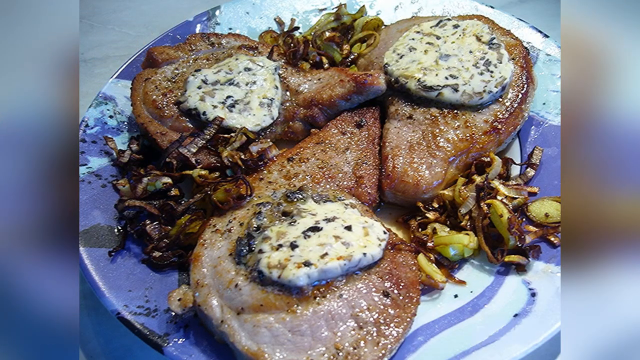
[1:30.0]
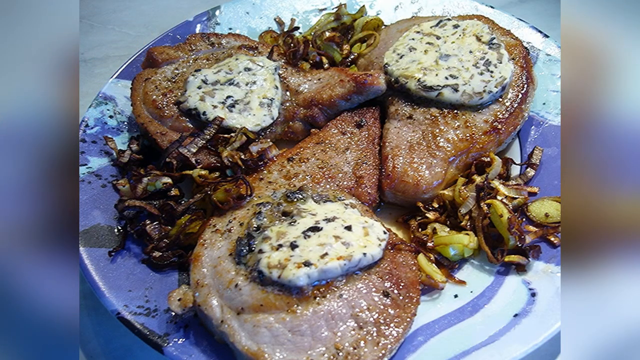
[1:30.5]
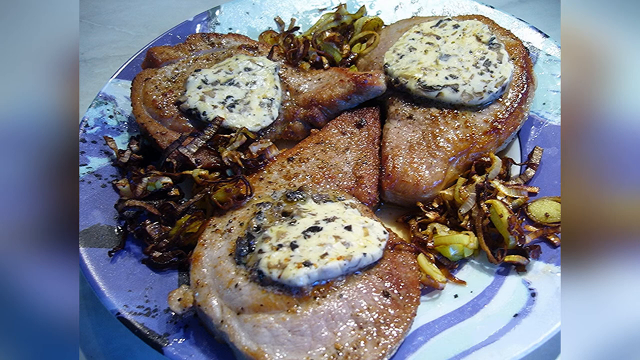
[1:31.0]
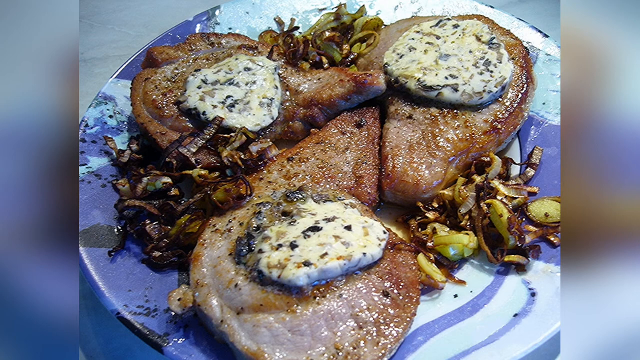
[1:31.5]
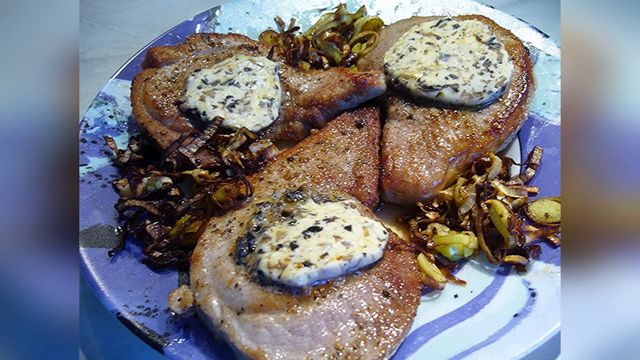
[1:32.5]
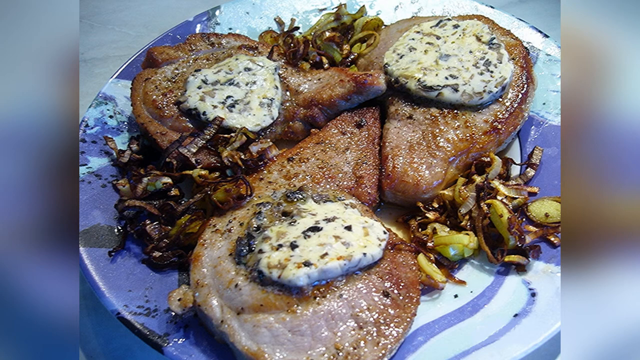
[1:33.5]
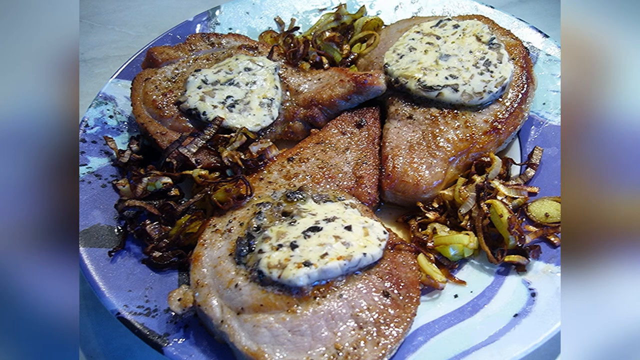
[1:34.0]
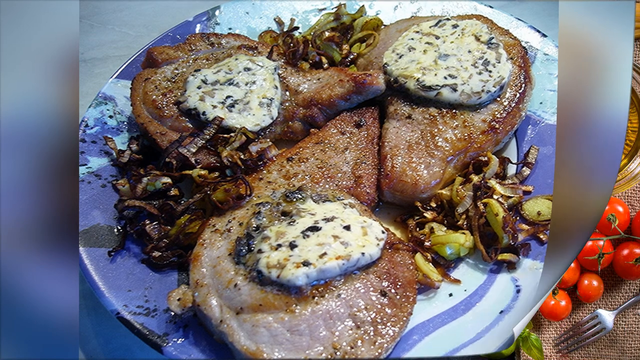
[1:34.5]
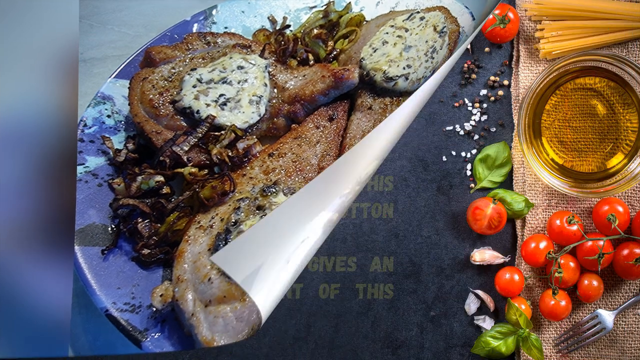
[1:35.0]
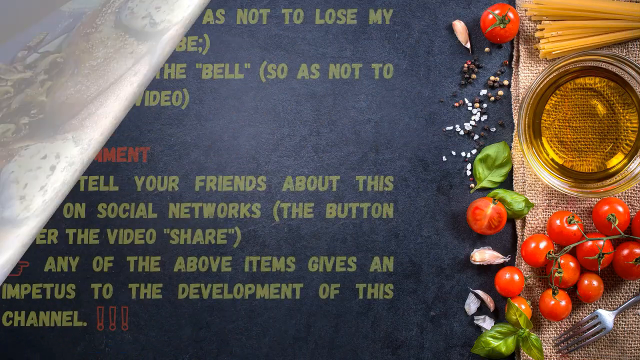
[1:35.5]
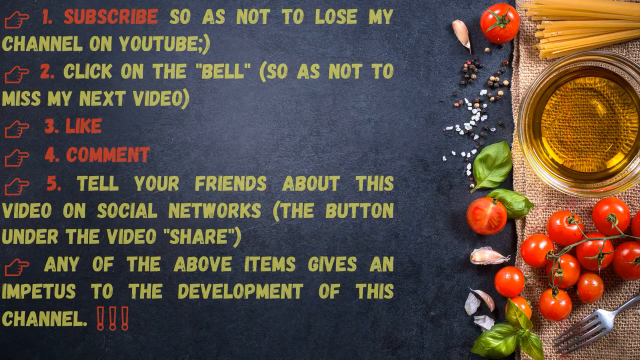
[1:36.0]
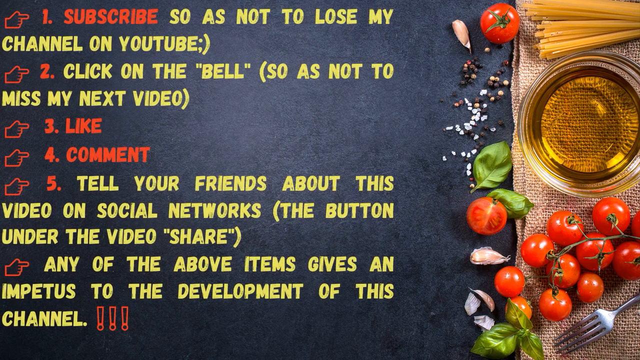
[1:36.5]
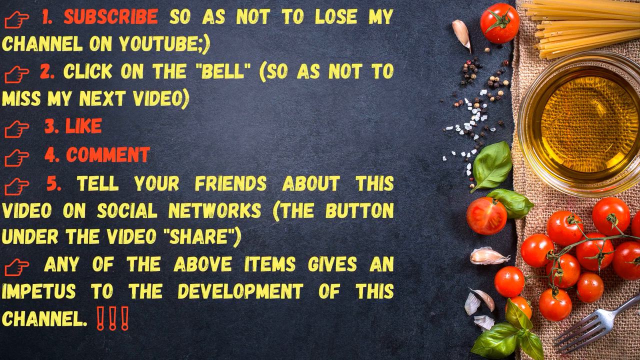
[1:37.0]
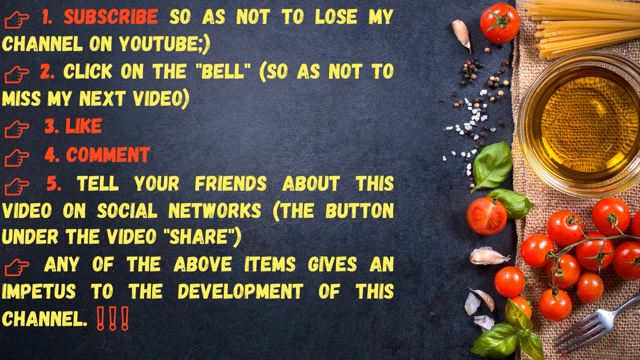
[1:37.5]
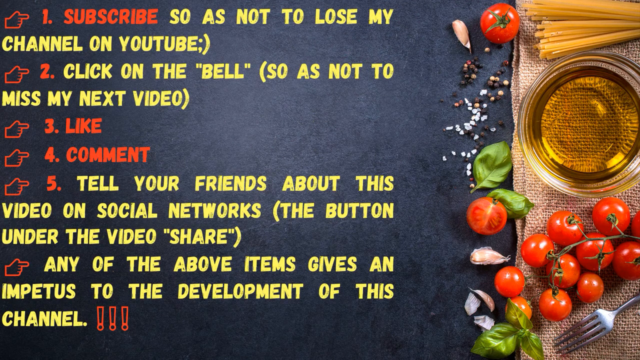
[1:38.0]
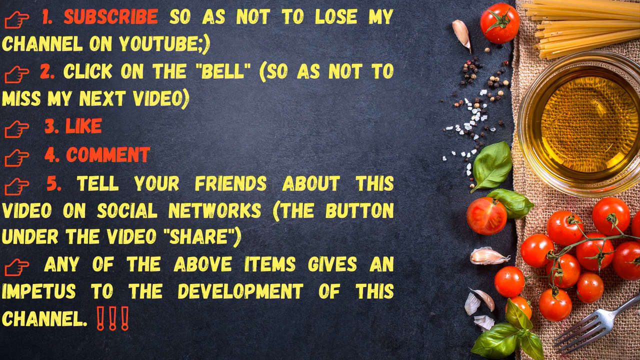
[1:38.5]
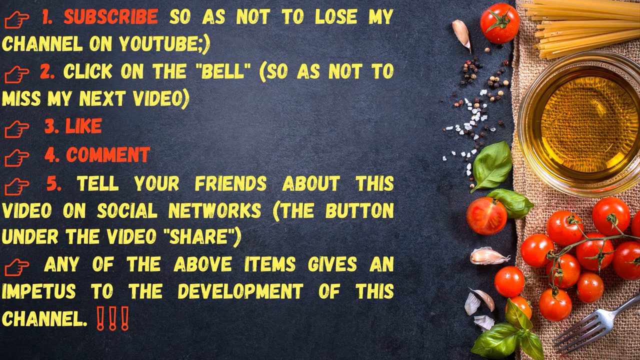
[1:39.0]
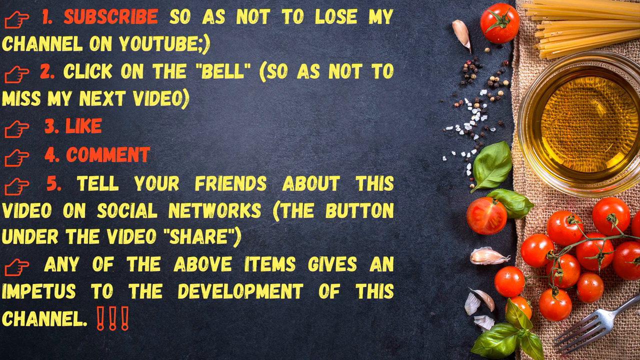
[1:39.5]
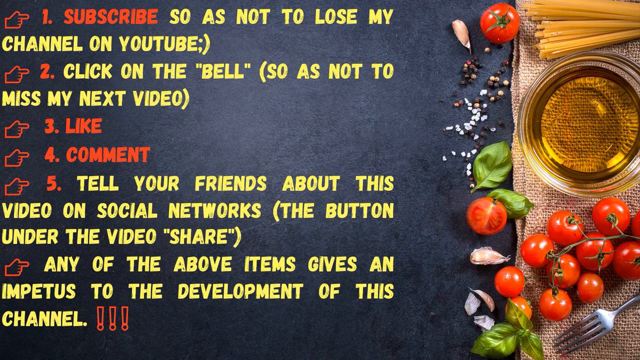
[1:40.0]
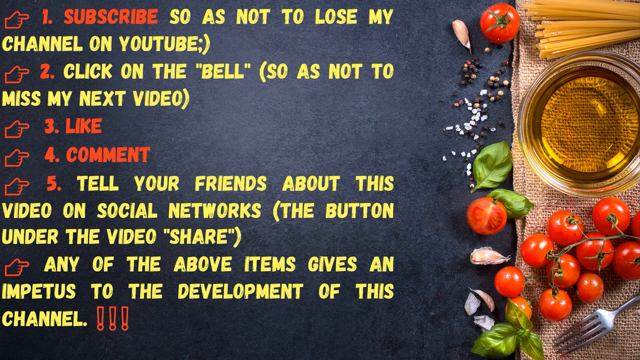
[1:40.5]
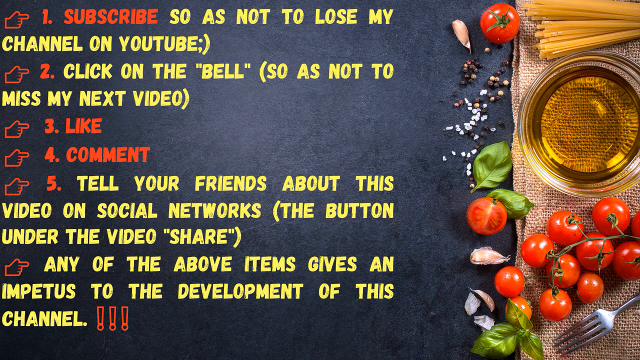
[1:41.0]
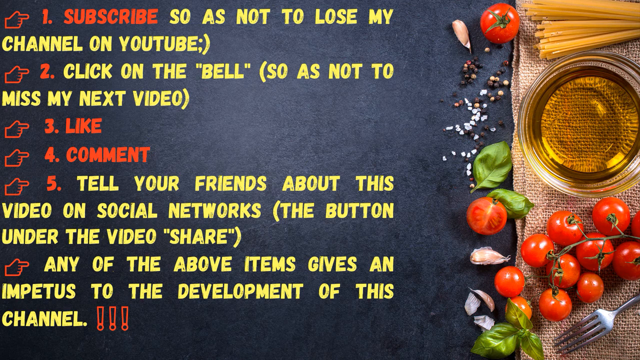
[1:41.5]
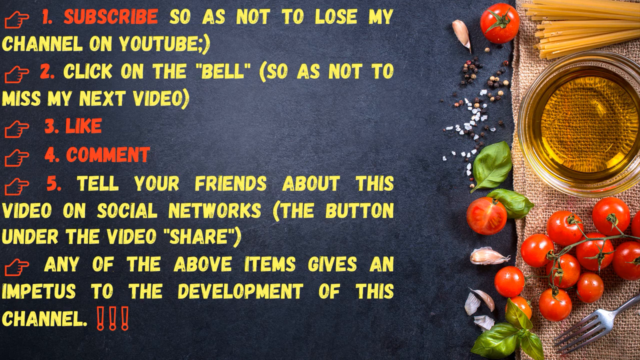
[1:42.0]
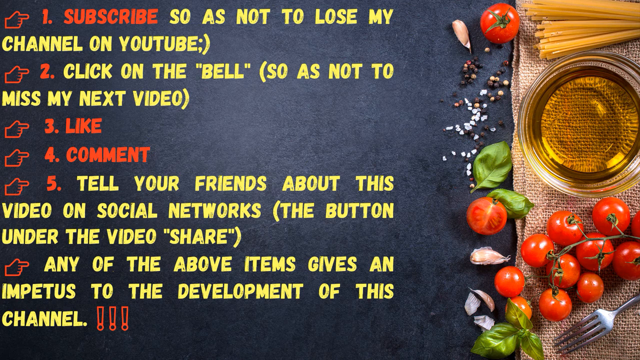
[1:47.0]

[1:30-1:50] A still image shows the same image that appeared earlier: three pieces of meat with a white, creamy topping and other little cut-up bits next to it. The video then changes to a long text ending that reads "1. Subscribe so as not to lose my channel on YouTube, 2. click on the bell so as not to miss my next video, 3. like for comment, 5. tell your friends about this video on social networks, the button under the video share, and any of the above items gives an impetus to the development of this channel." A picture of tomatoes and some oil is on the right side.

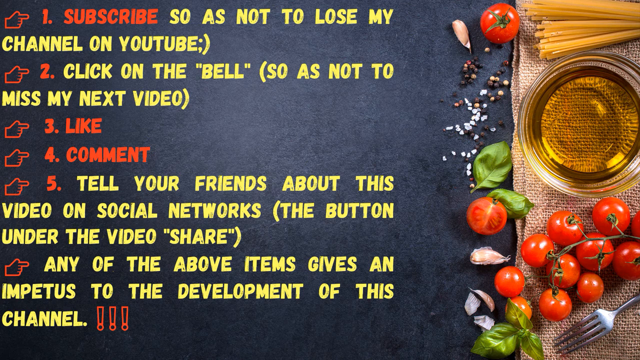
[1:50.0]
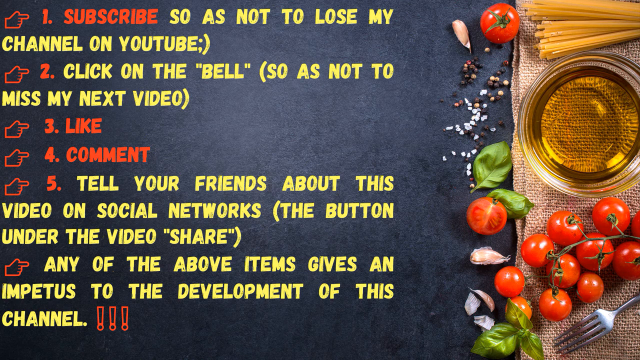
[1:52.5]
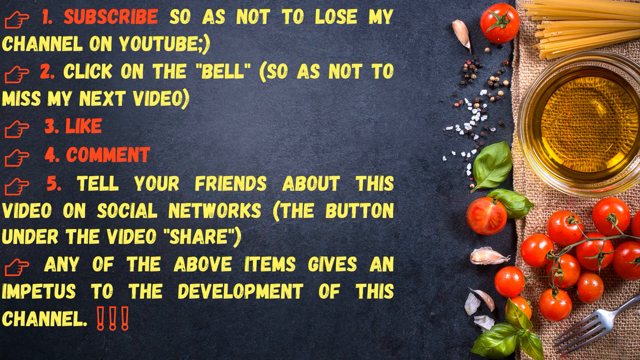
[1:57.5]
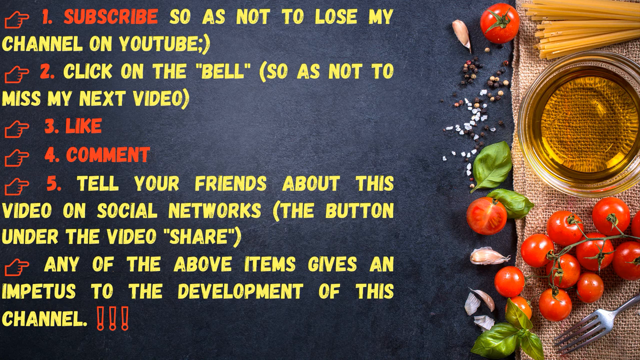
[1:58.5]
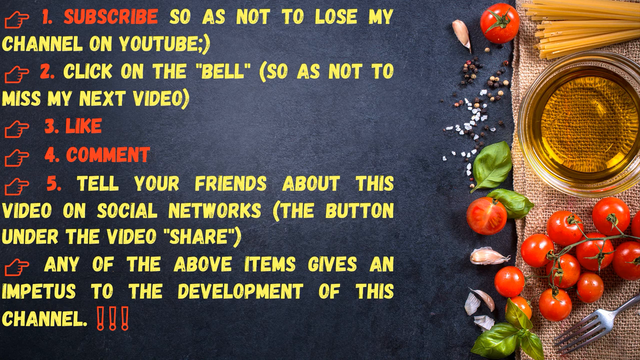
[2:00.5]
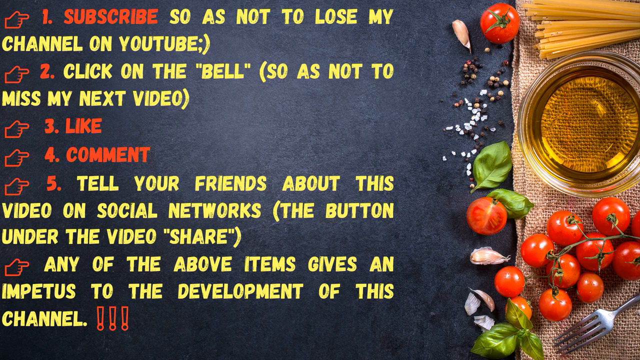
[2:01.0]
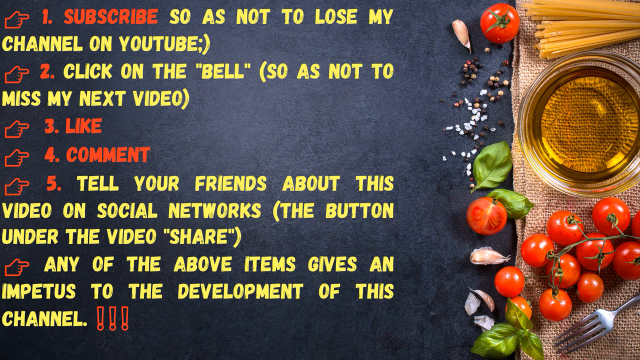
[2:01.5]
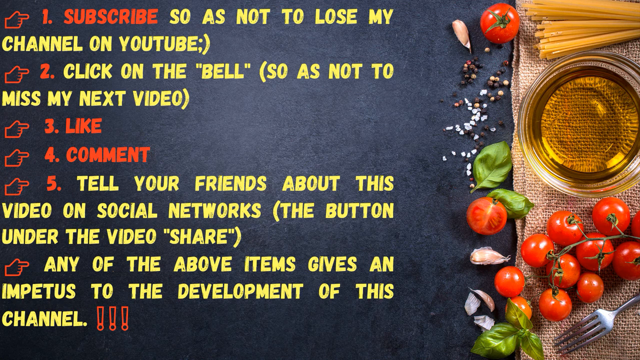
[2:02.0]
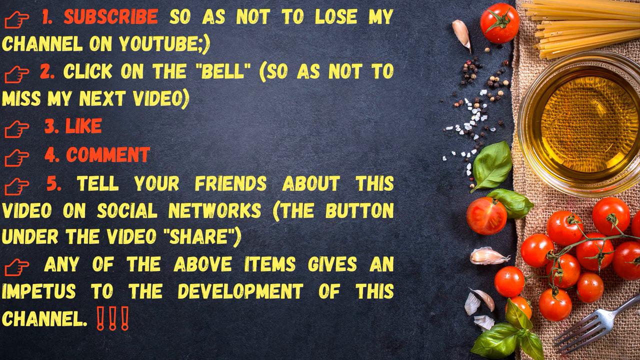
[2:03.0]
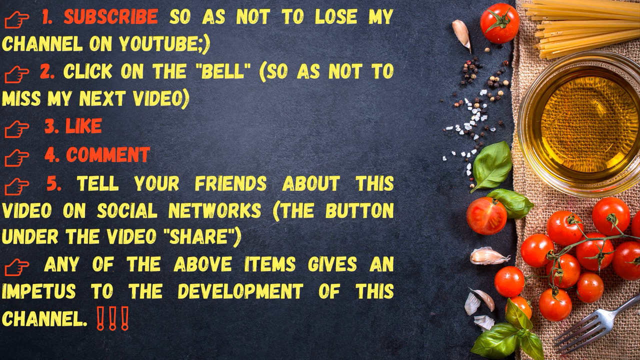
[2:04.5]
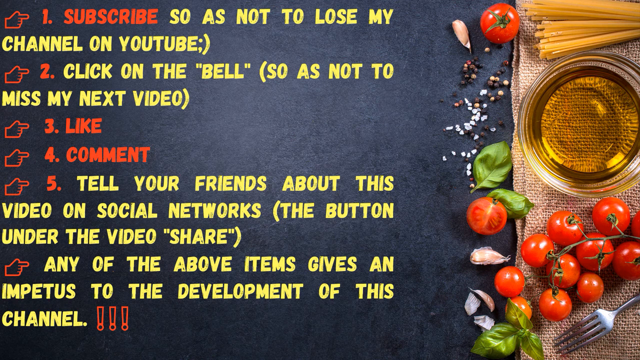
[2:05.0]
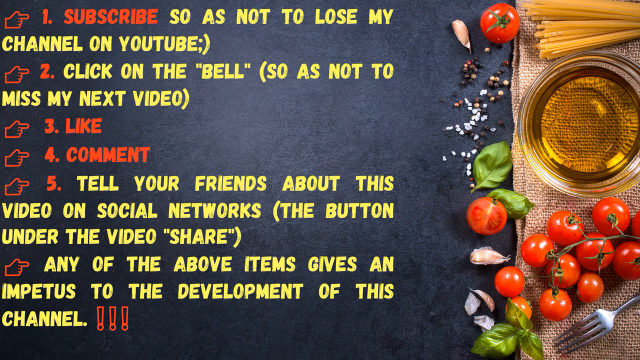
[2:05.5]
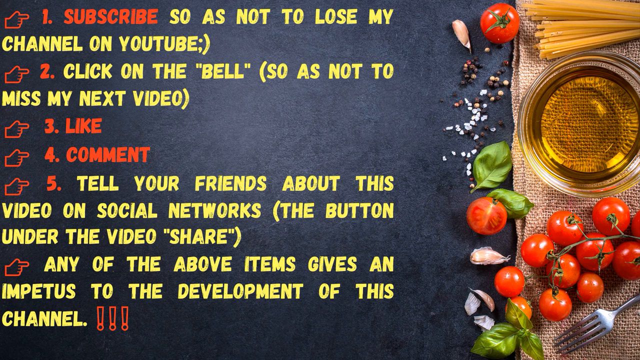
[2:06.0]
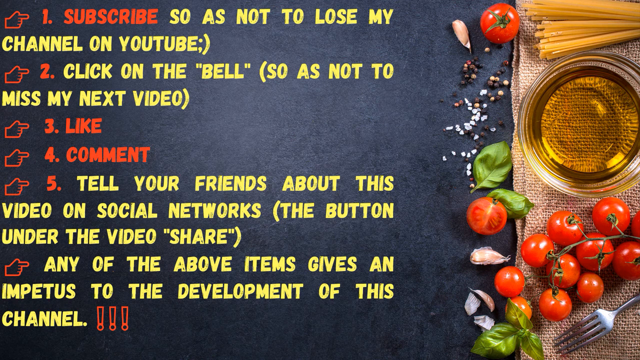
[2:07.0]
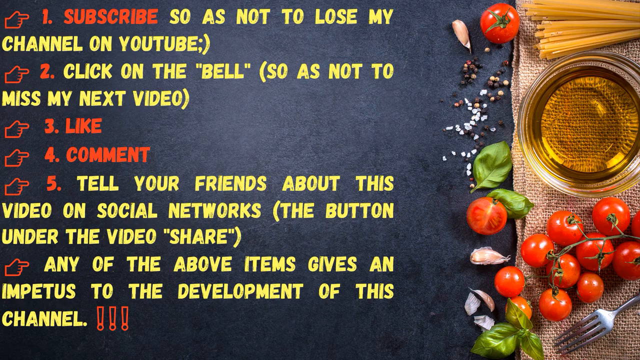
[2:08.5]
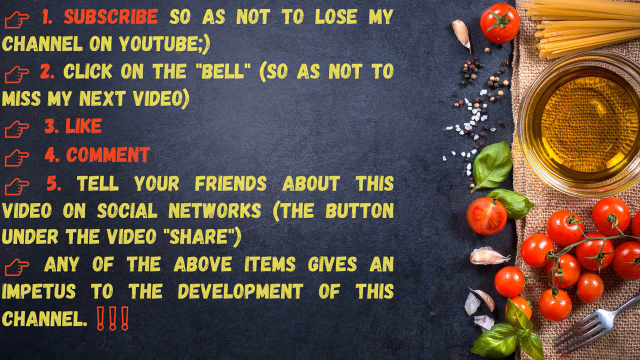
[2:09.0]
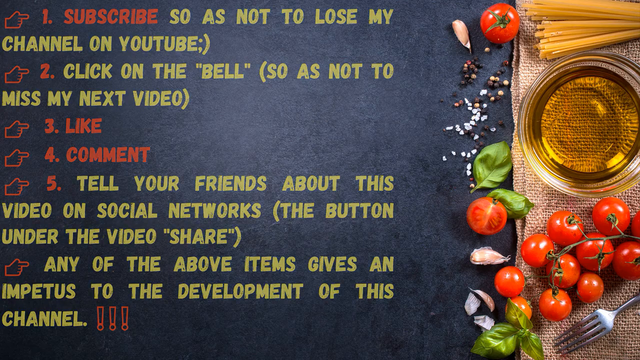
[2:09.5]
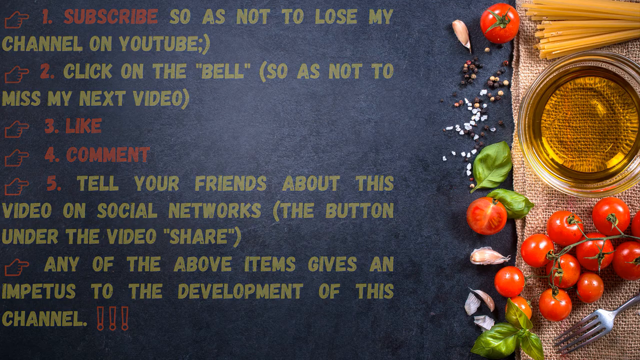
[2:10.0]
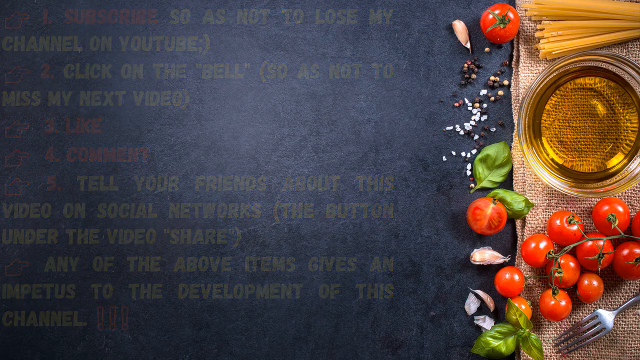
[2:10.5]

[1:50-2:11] At the end of the video, text reads "1. subscribe so as not to lose my channel on YouTube 2. click on the bell so as not to miss my next video 3. like 4. comment 5. tell your friends about this video on social networks the button under the video share any of the above items gives an impetus to the development of this channel." On the right are some tomatoes, some gold oil, and some pasta, with some kind of cloth underneath the food. The text slowly fades out while the background image remains, a kind of grayish background with the food items on the right side.